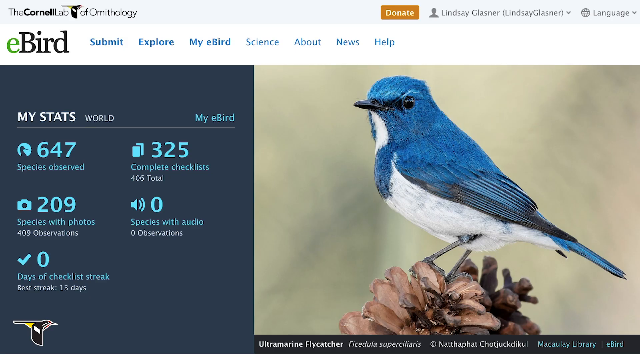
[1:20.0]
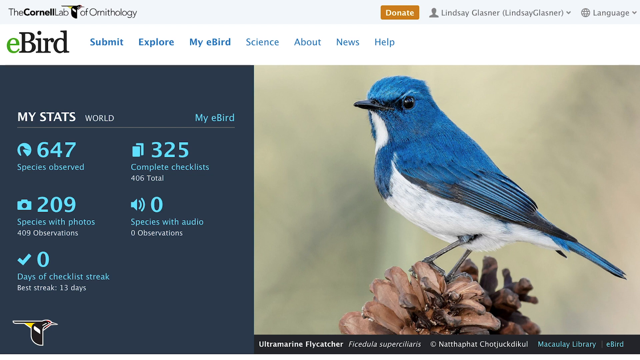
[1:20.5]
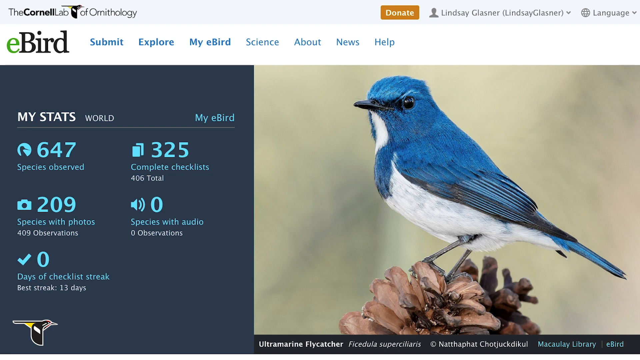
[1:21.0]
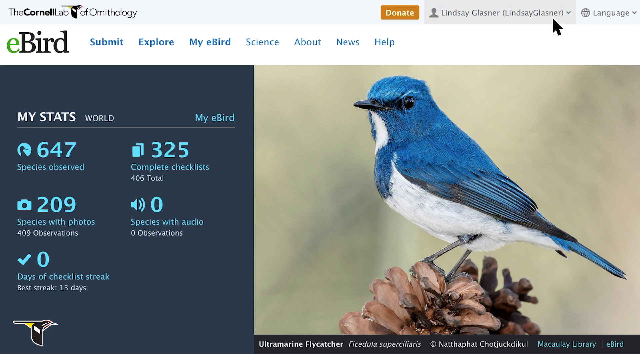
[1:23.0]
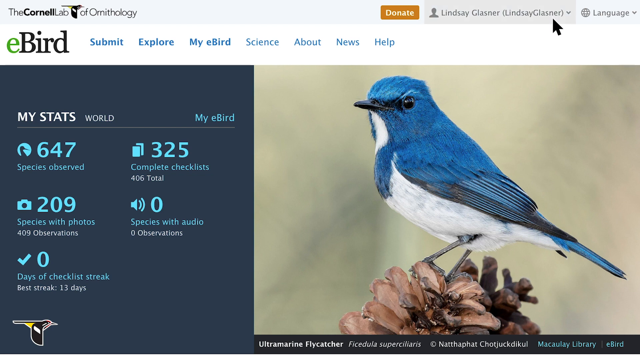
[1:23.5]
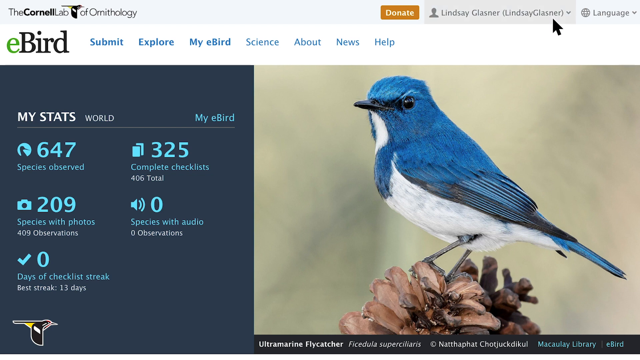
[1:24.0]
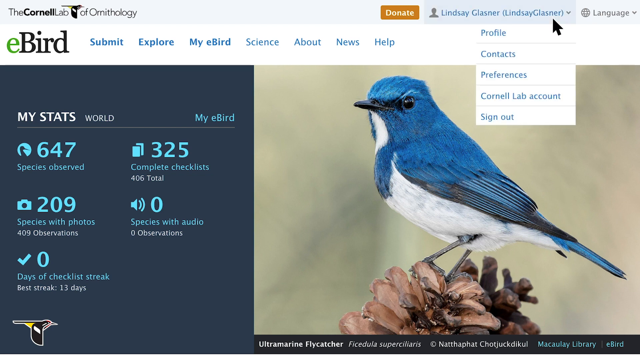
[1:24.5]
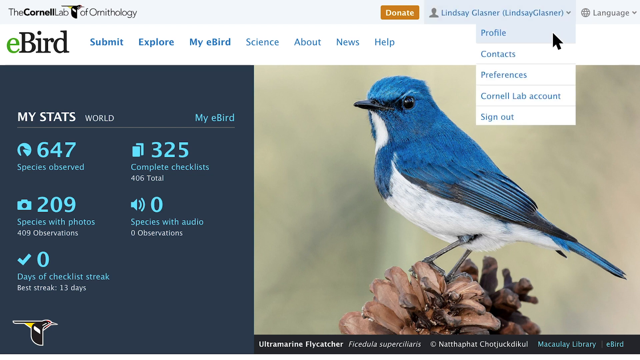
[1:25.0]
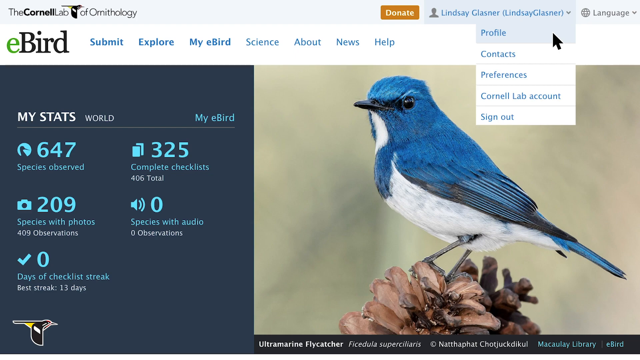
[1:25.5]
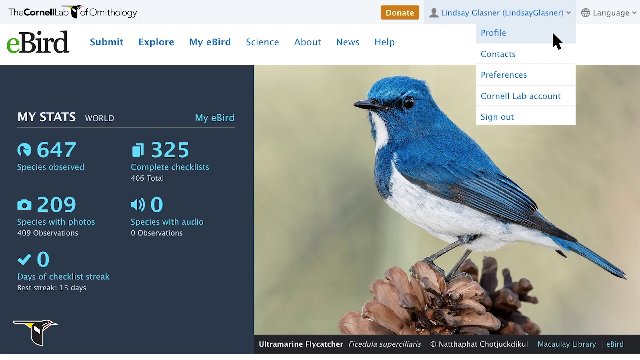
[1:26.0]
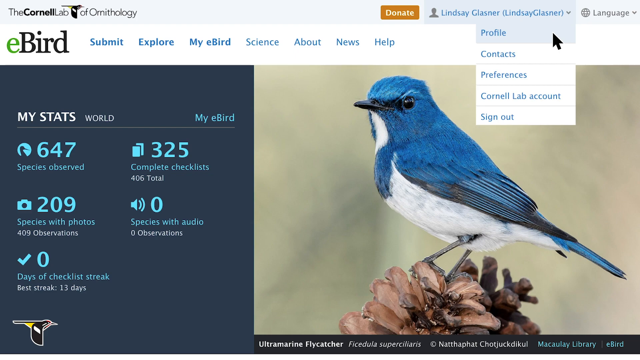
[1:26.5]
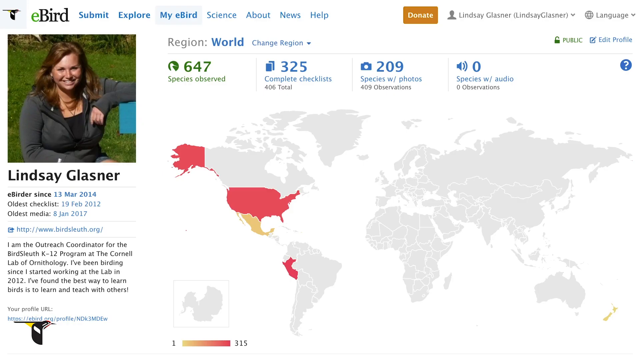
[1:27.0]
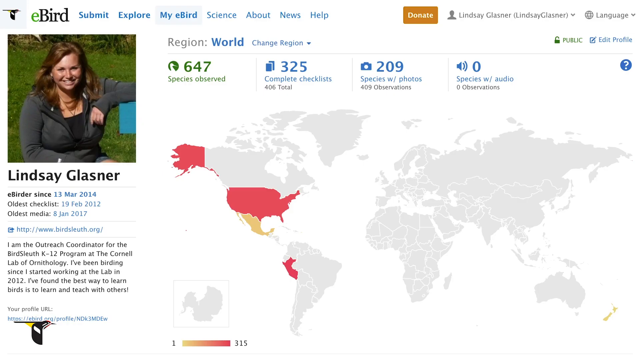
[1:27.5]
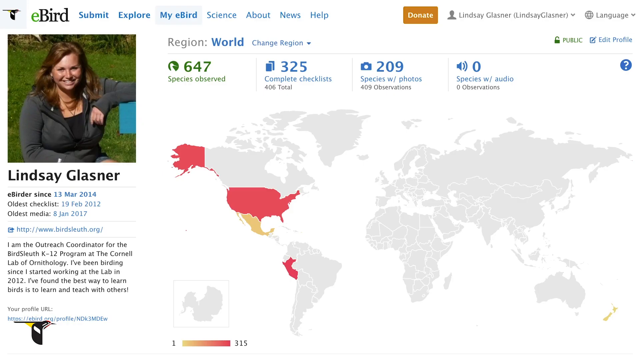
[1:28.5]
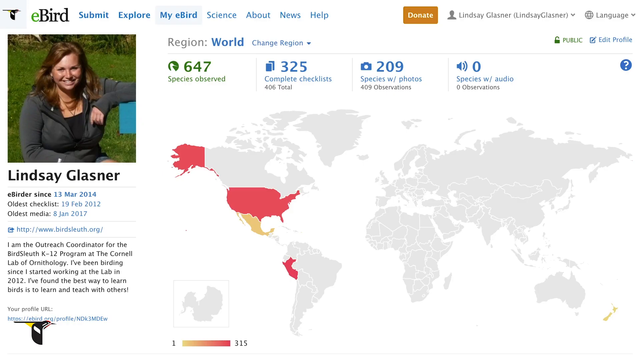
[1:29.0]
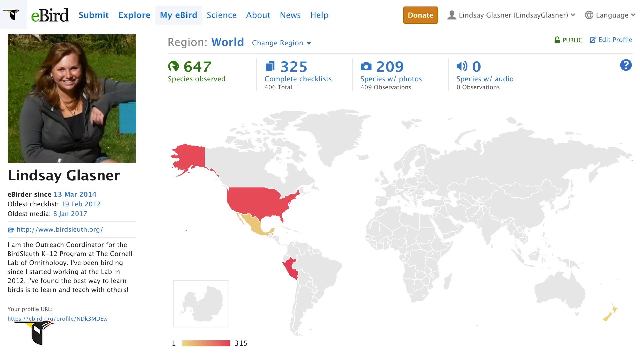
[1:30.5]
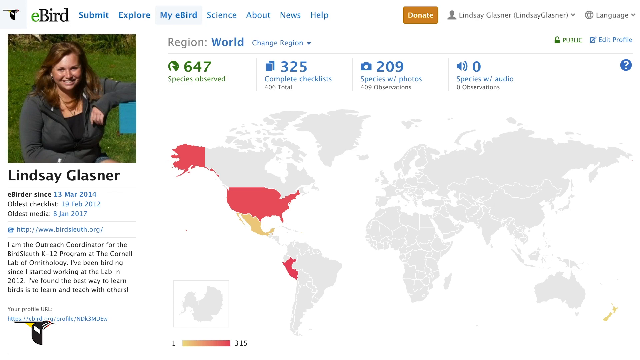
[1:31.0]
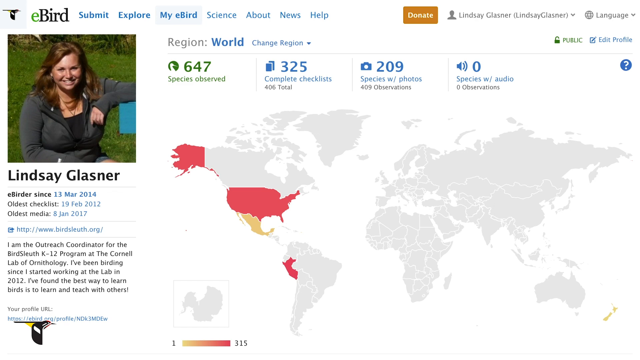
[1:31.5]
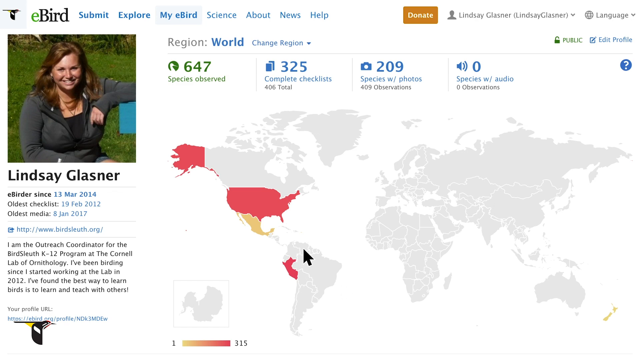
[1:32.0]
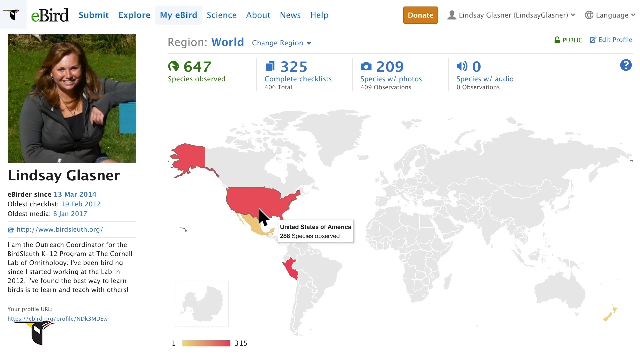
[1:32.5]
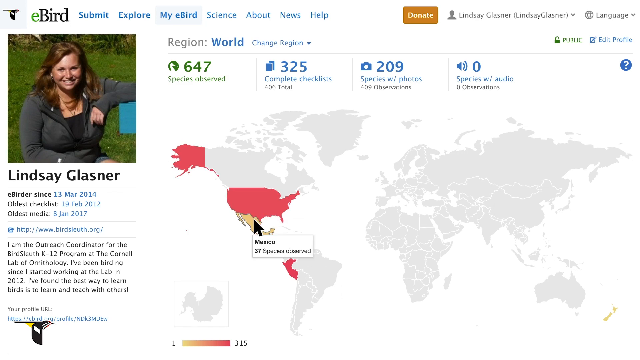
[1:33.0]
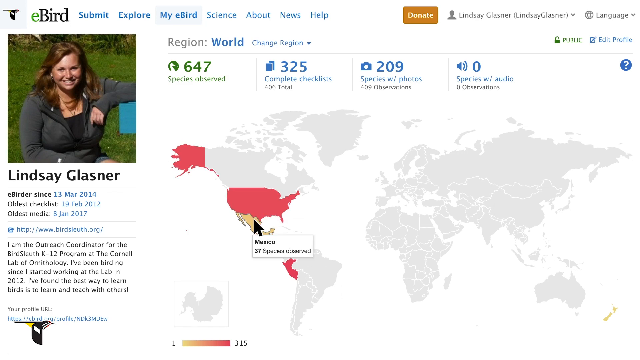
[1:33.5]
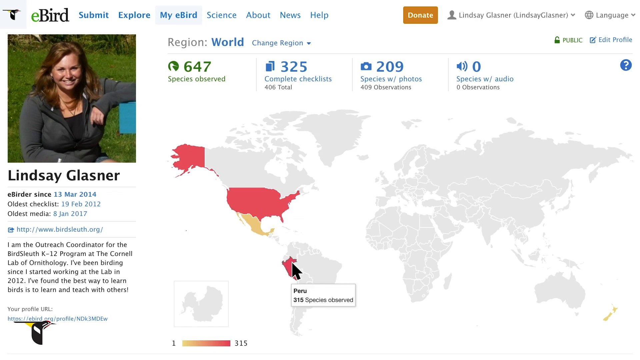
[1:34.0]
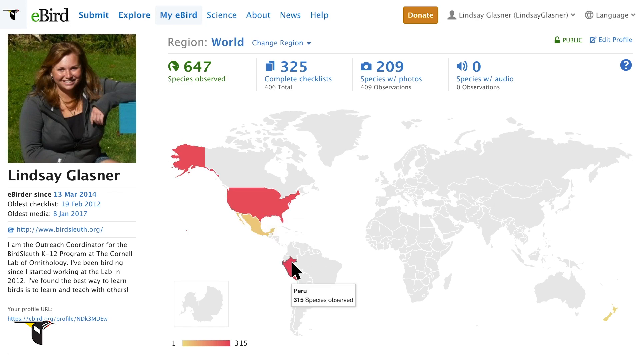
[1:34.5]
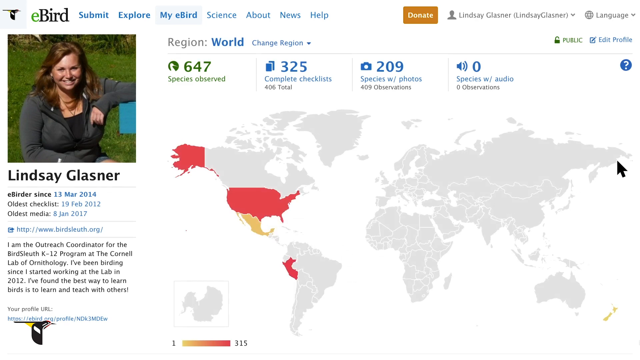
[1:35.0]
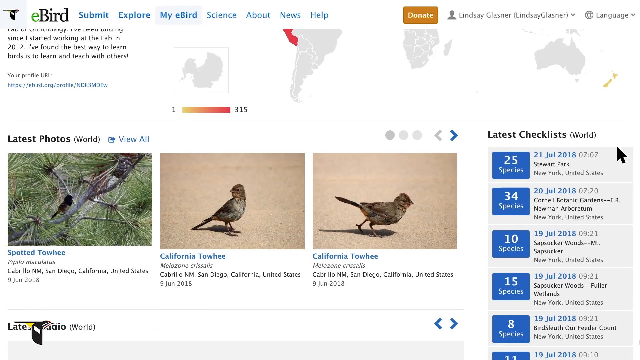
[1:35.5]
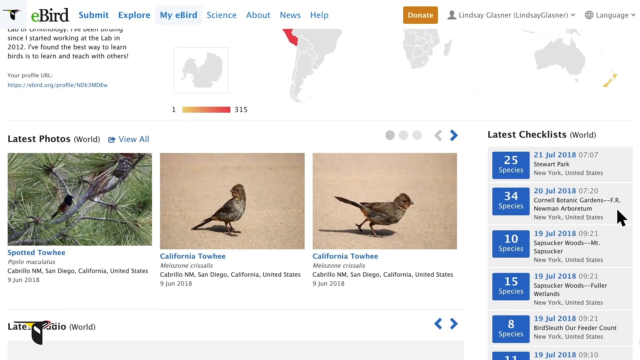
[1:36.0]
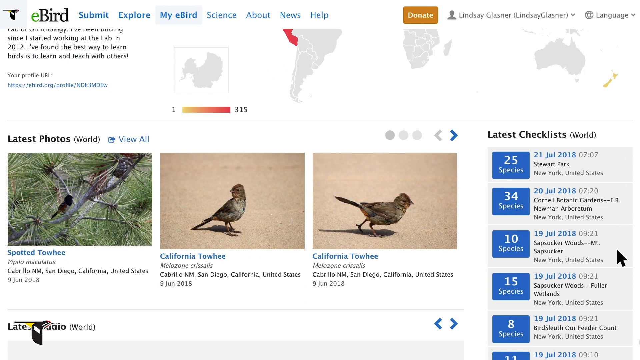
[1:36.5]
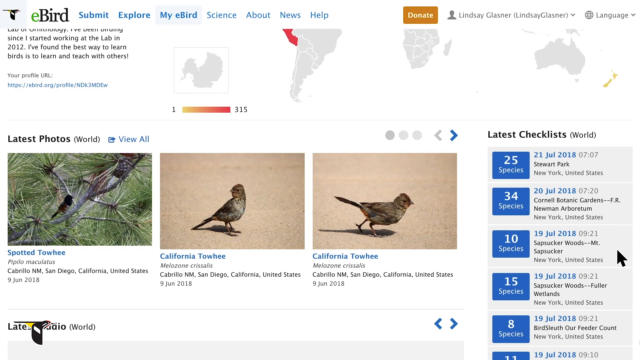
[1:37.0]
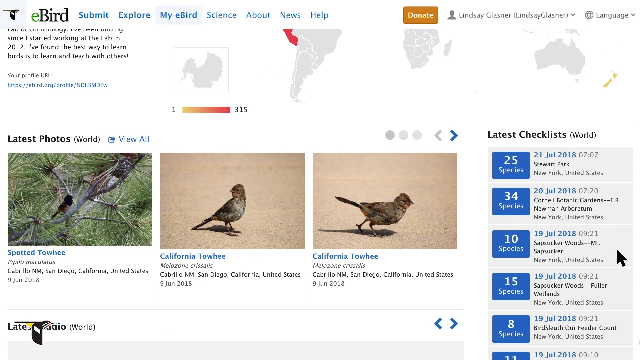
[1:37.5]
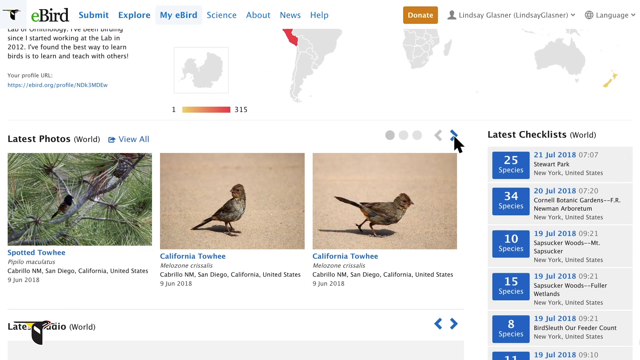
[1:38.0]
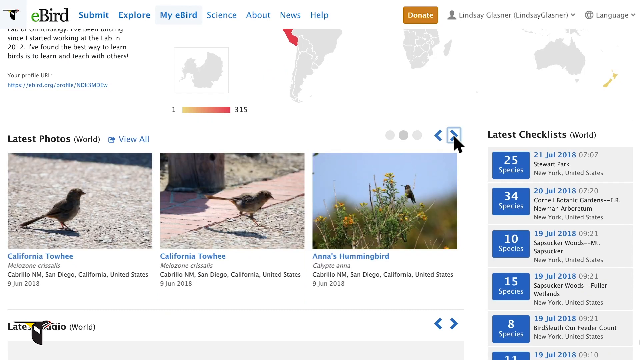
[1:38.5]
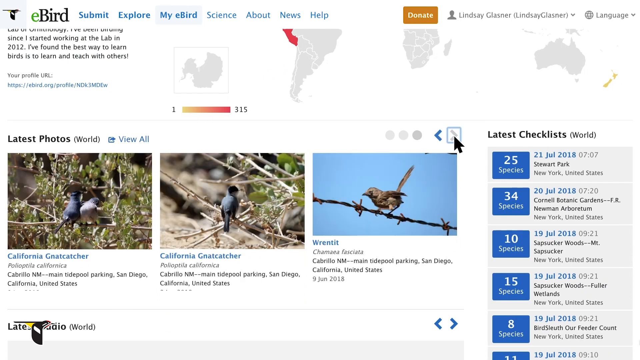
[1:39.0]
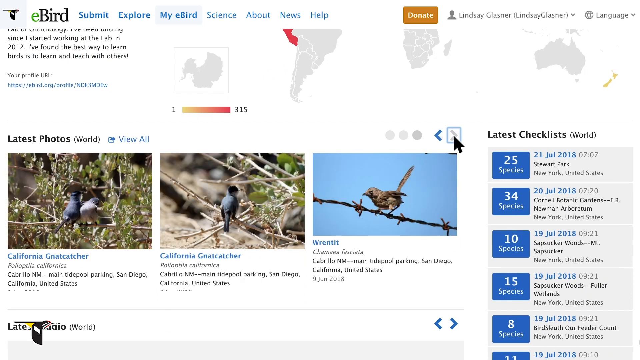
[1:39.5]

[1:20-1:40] The cursor moves up to the profile button and clicks it, bringing up a dropdown listing profile, contacts, preferences, Cornell Lab account and sign out. It moves down to profile, which highlights in blue. On the left side of the profile page is a picture of a woman sitting outside with green grass behind her, red hair past her shoulders and a black hoodie. Beneath it reads "Lindsay Glasner," followed by details such as how long she has been on eBird, oldest checklist and oldest media, plus a link and information about her. To the right are region, world and change regions, with some information below and a map of the world underneath, on which Alaska, America and part of South America are lit up red and Mexico is a tannish color. The cursor hovers over America, then Mexico, then moves down to South America, showing that it is Peru. The page scrolls down a little to "latest photos" on the left, with three bird photos and information under them, and "latest checklists" with links down the right side. The arrow button on the latest photos is clicked, scrolling through some of the pictures.